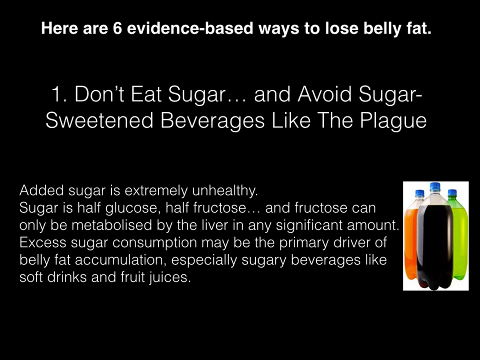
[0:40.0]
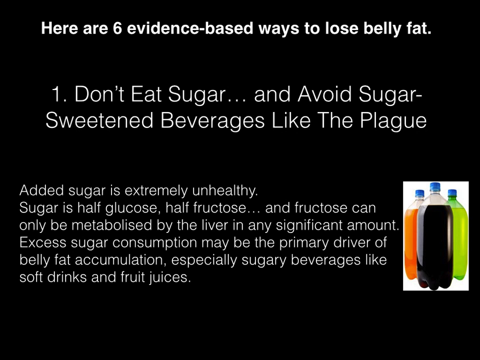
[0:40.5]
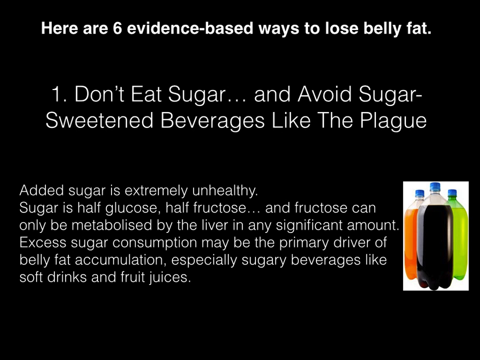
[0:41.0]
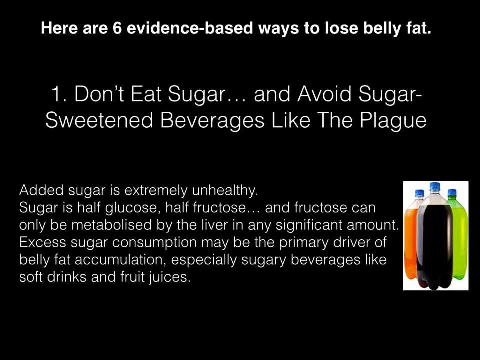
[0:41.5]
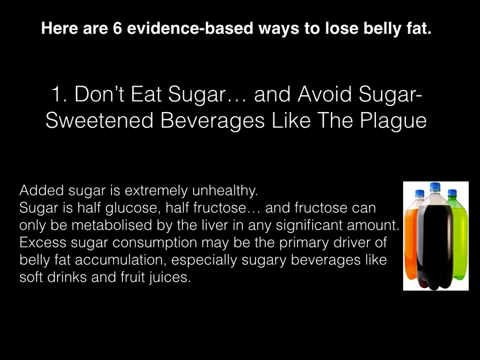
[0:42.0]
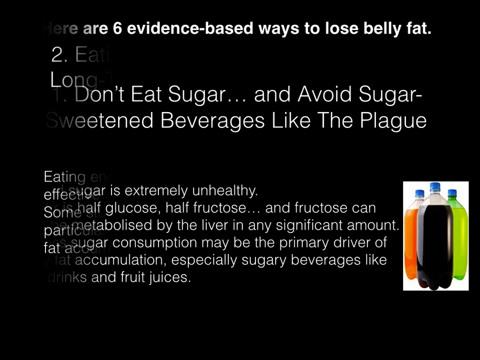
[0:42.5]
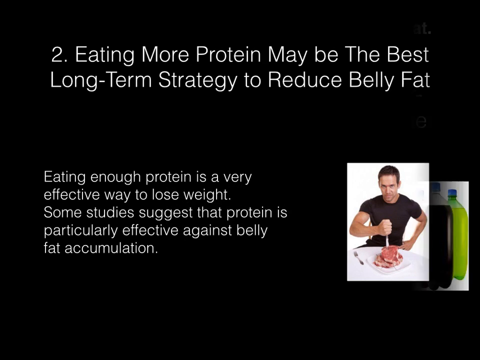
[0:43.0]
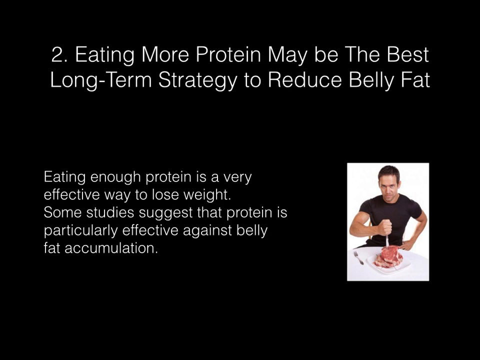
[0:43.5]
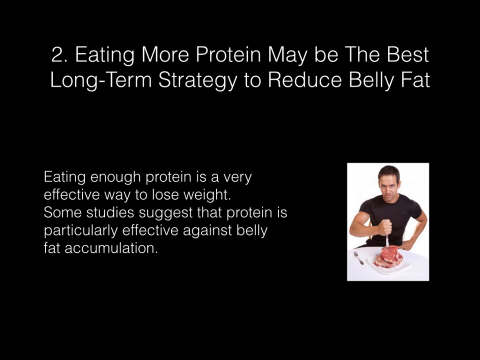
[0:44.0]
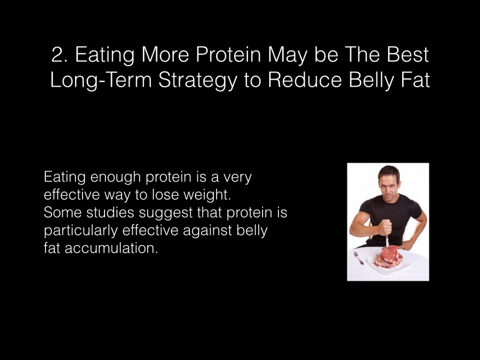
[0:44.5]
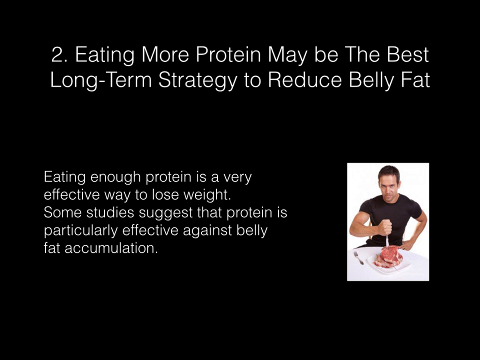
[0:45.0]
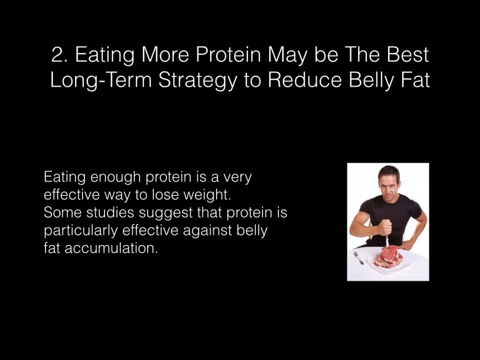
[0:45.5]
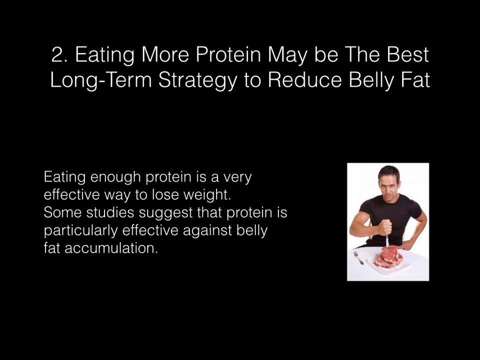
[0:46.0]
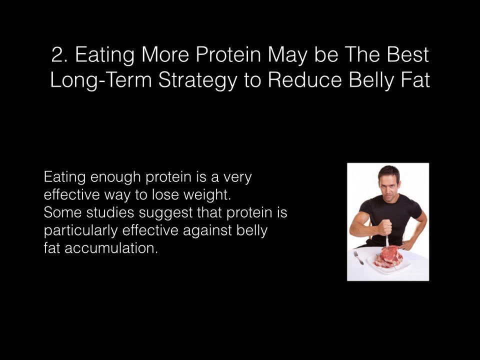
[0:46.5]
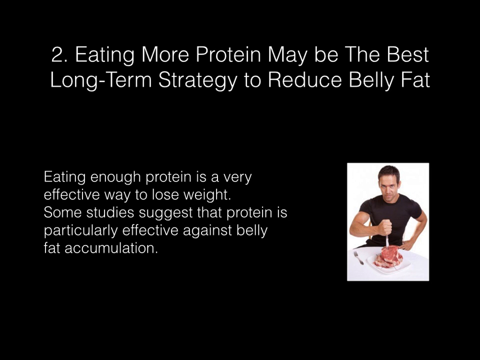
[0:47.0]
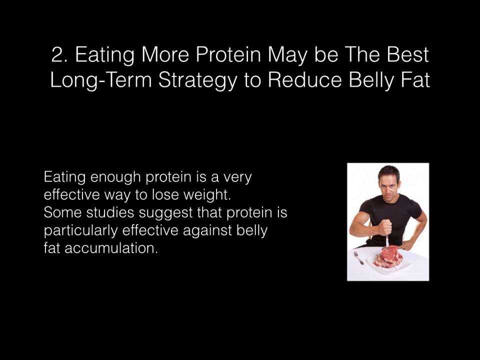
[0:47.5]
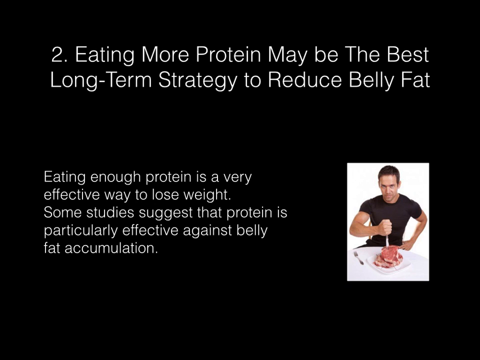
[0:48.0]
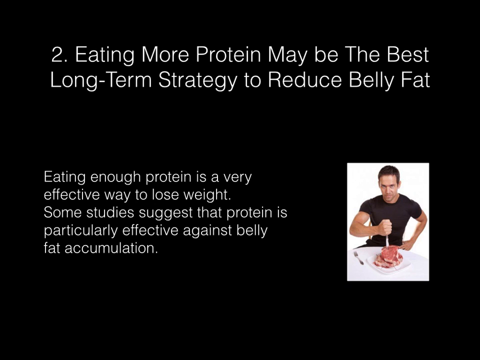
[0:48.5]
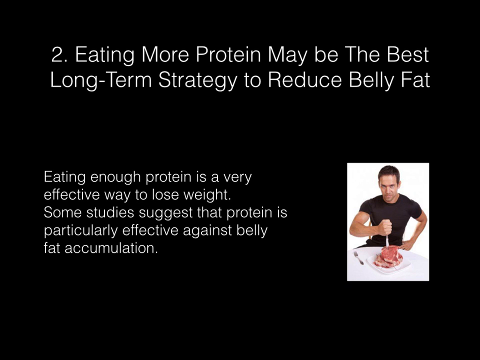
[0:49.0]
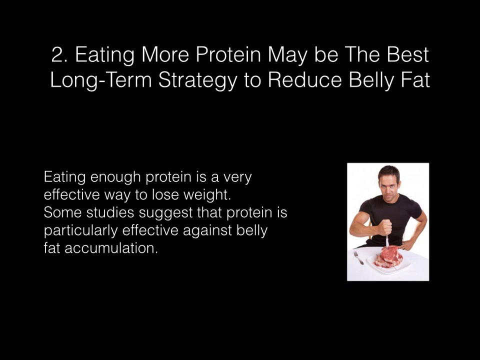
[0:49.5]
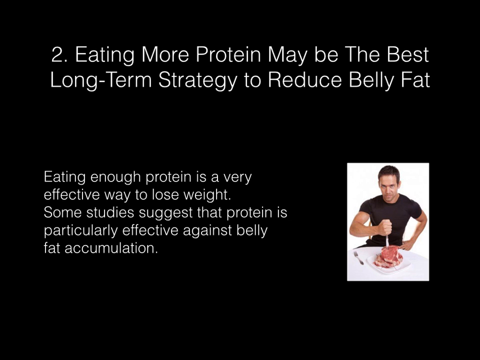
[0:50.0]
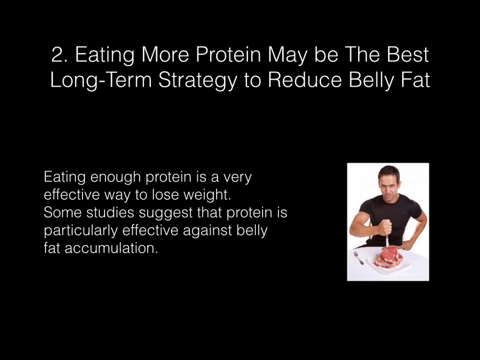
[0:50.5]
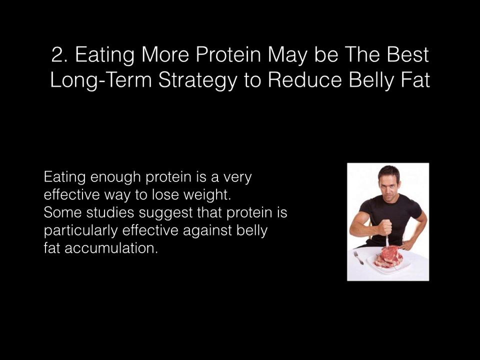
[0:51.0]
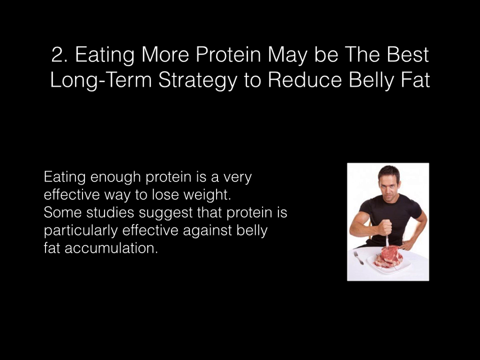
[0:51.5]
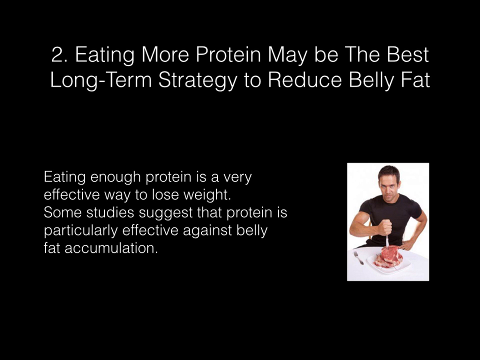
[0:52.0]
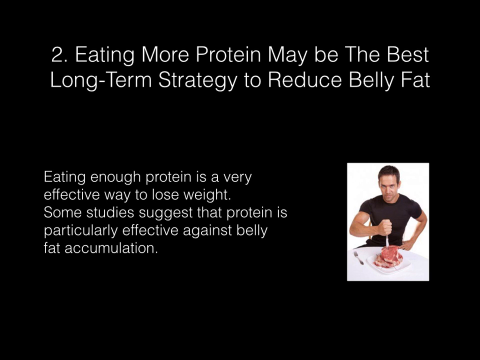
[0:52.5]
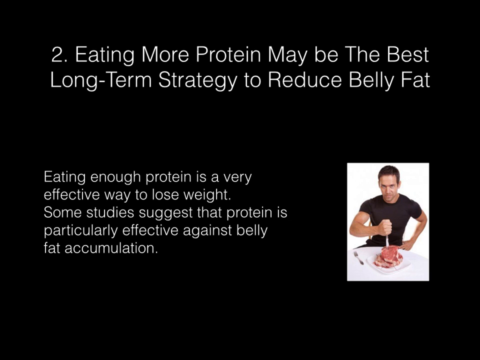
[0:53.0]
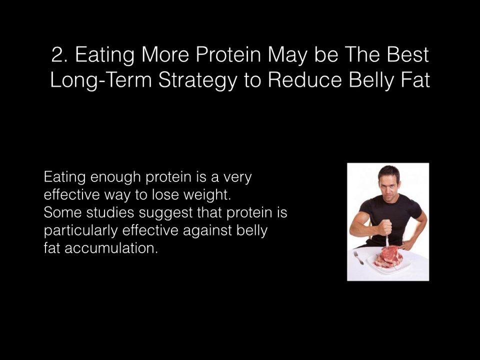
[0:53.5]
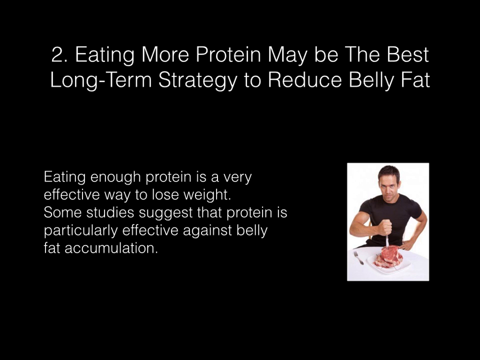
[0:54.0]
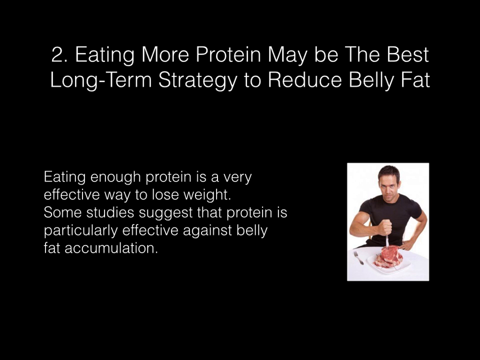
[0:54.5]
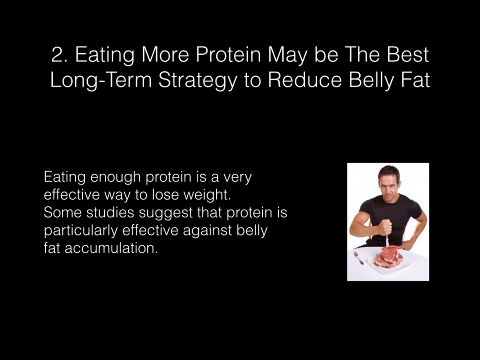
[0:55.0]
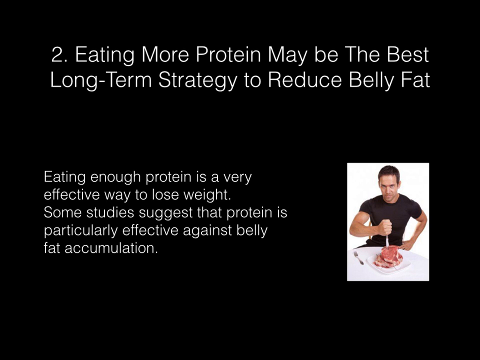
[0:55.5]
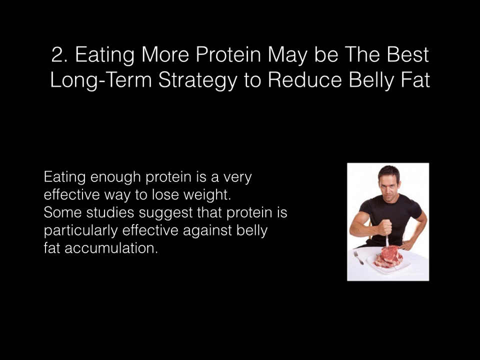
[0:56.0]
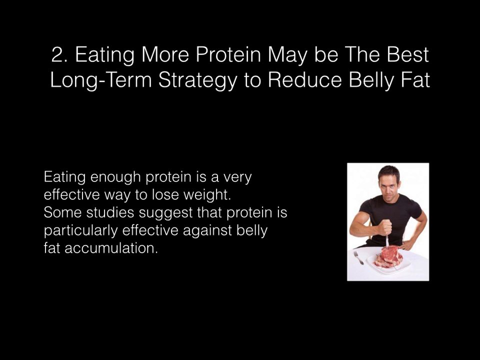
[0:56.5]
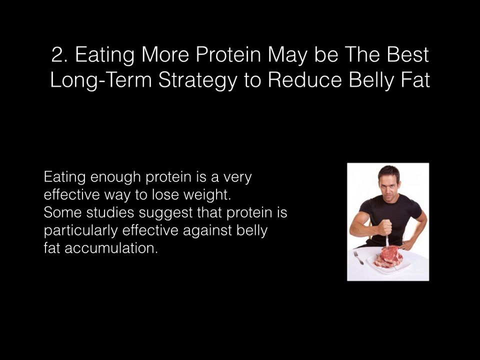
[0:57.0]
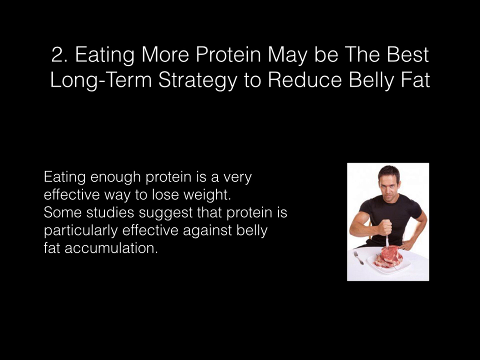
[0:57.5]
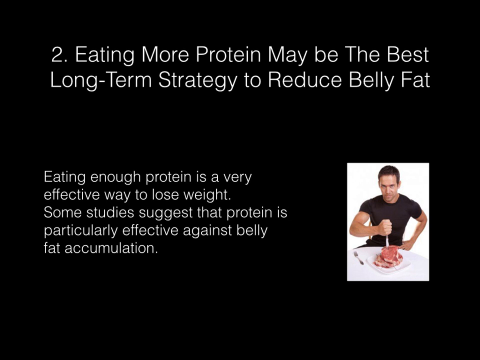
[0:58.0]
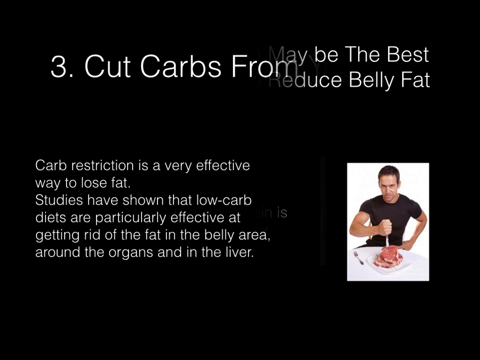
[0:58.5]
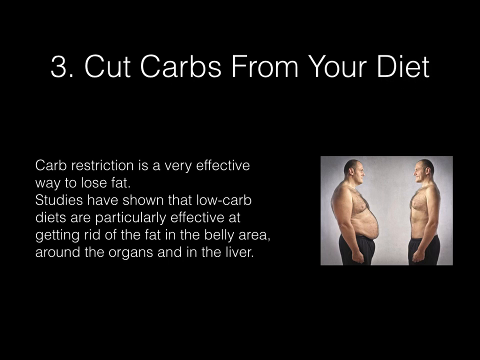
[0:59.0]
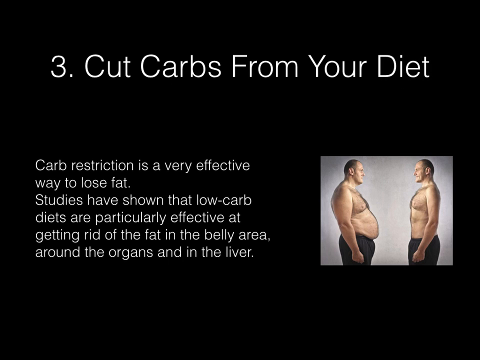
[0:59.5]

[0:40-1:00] This health and fitness video uses photos or screenshots from a computer. It shows a slide reading "here are six evidence-based ways to lose belly fat," with the first point reading "don't eat sugar and avoid sugar sweetened beverages like the plague." Below is a paragraph of facts about sugar and a photo of three soda bottles that are orange, black and green. The video then shows slide number two, which reads "eating more protein may be the best long-term strategy to reduce belly fat." At the bottom it reads "eating enough protein is a very effective way to lose weight. Some studies suggest that protein is particularly effective against belly fat accumulation." To the right is a picture of a muscular man with black hair stabbing a knife into some red meat on a plate. There is a fork on the table and a white background; he is sort of grimacing, with his left hand on his hip and his right hand clutching the knife against the meat. A third slide then briefly appears reading "three cut carbs from your diet," with a picture on the right of a very fat man with his belly pushed out and, to the right, the same person with less belly fat.